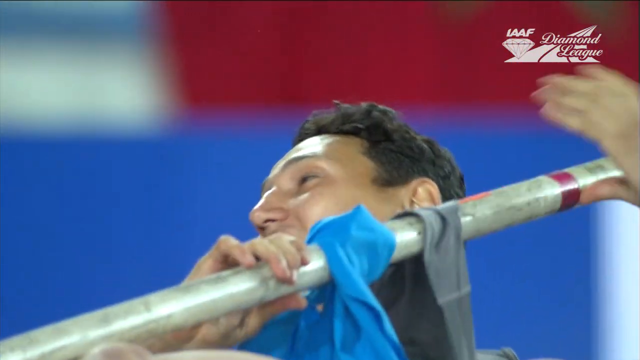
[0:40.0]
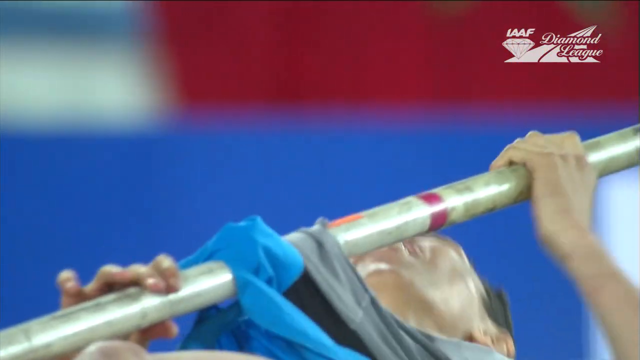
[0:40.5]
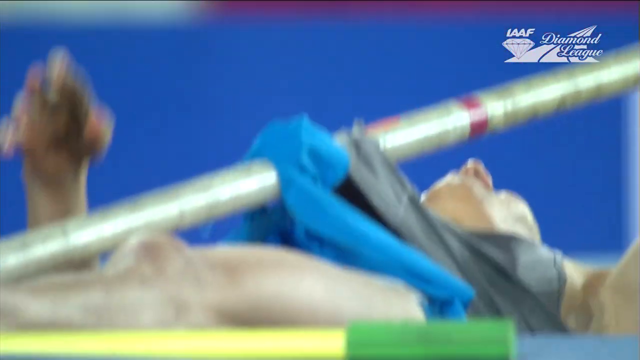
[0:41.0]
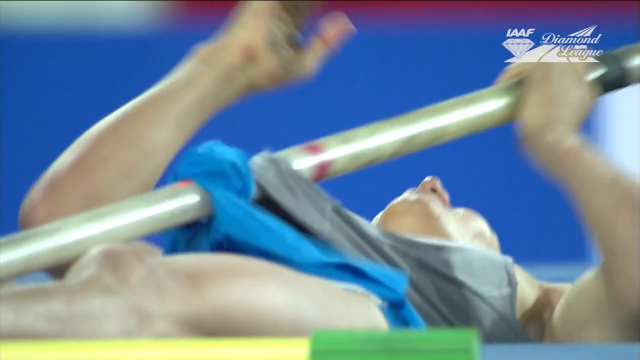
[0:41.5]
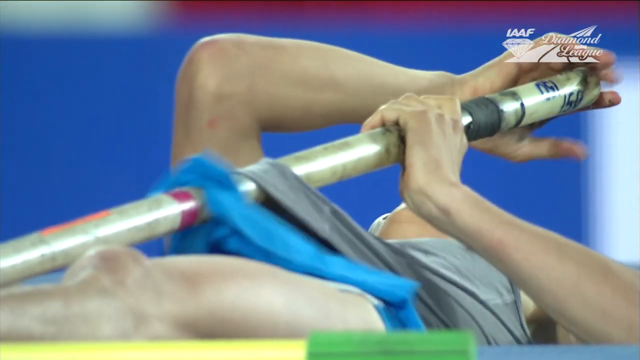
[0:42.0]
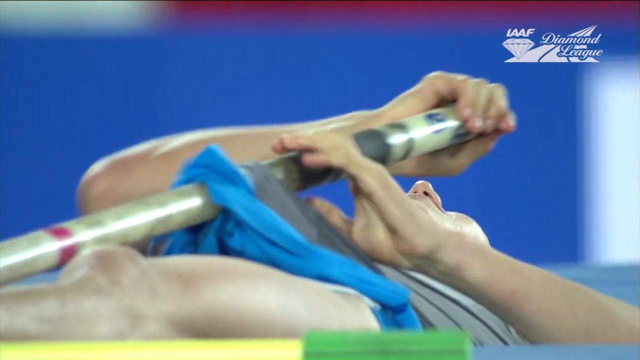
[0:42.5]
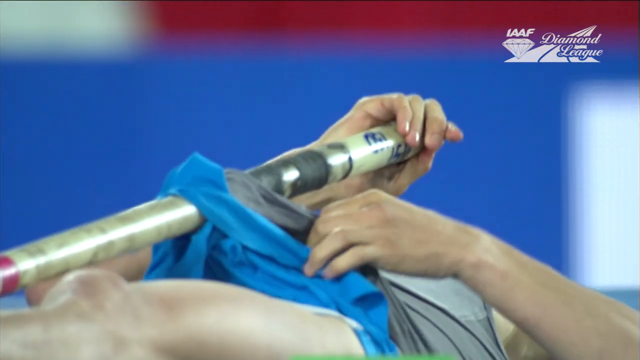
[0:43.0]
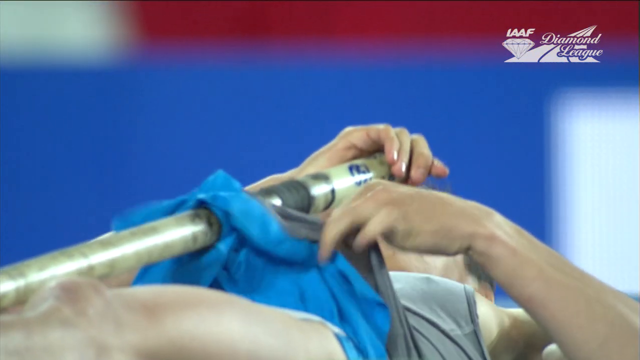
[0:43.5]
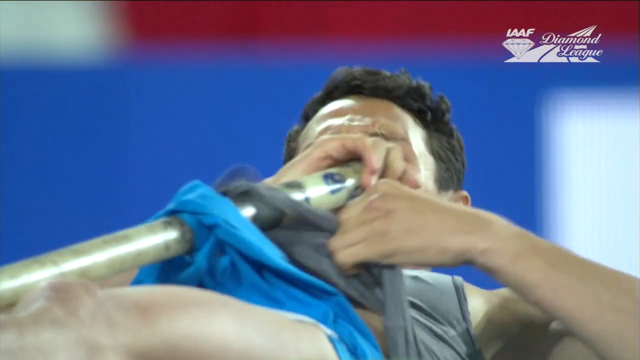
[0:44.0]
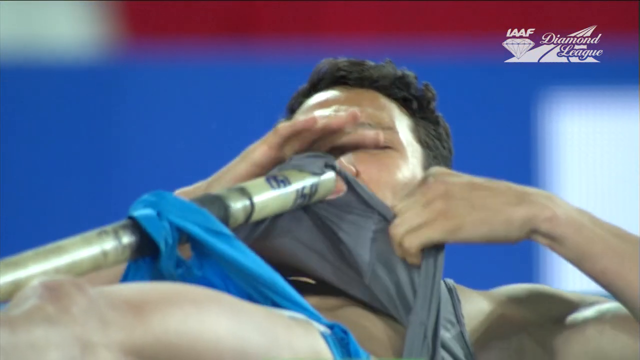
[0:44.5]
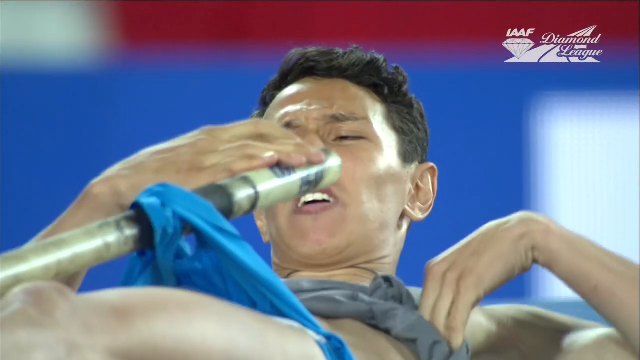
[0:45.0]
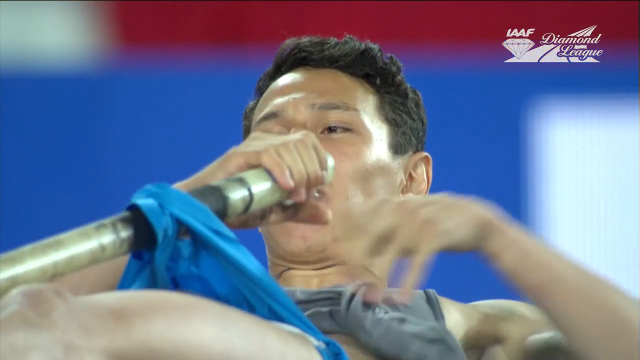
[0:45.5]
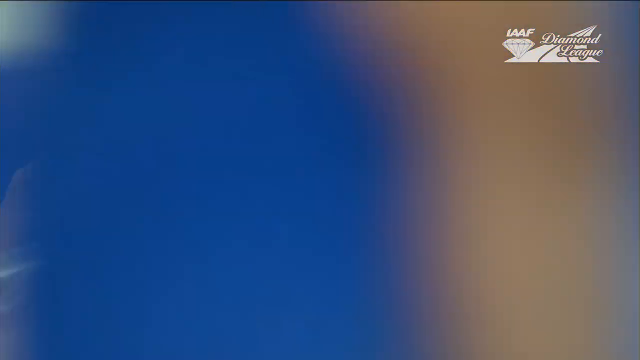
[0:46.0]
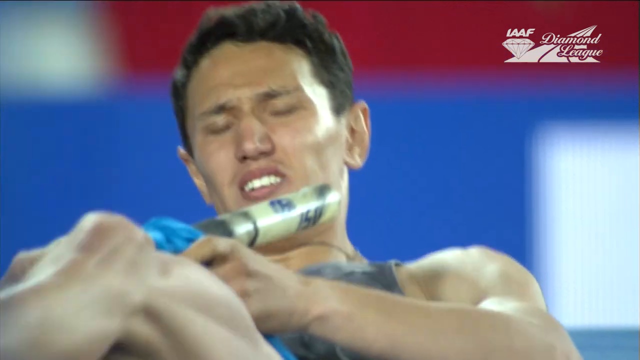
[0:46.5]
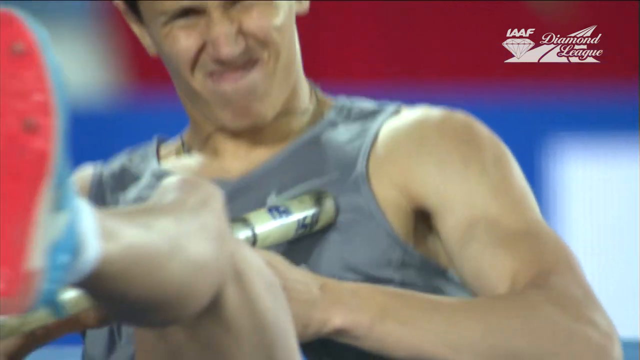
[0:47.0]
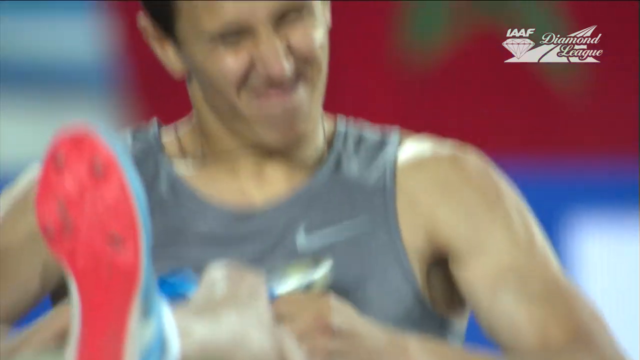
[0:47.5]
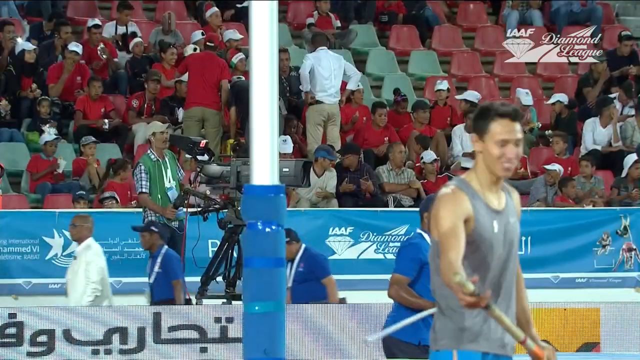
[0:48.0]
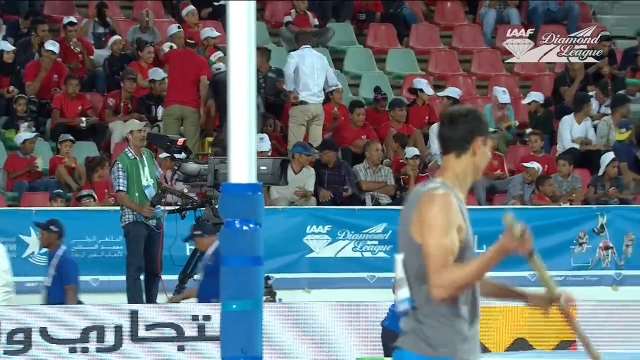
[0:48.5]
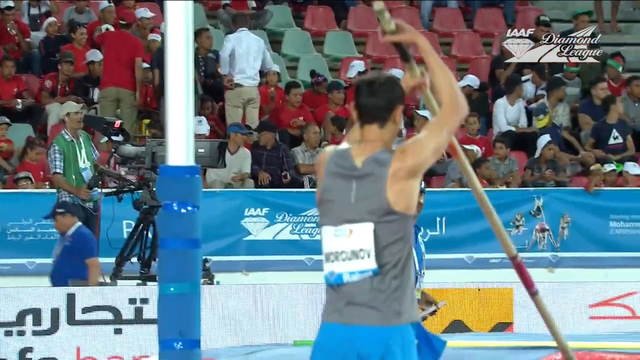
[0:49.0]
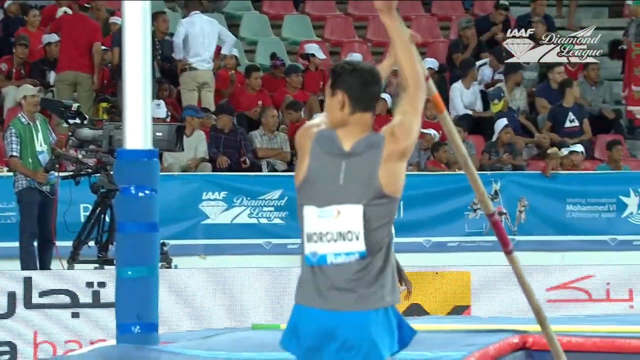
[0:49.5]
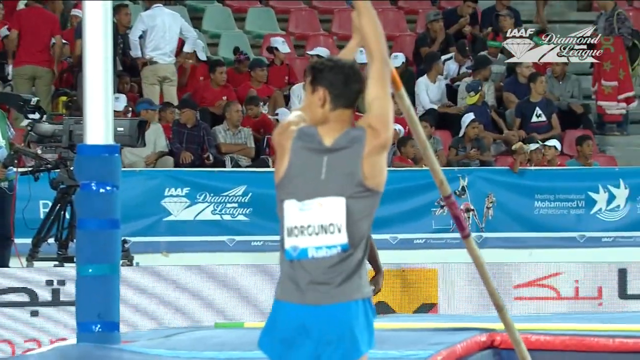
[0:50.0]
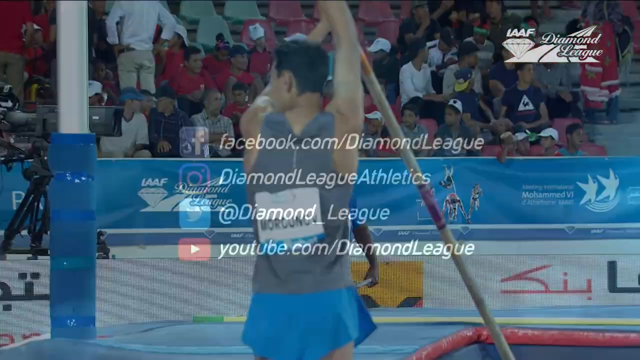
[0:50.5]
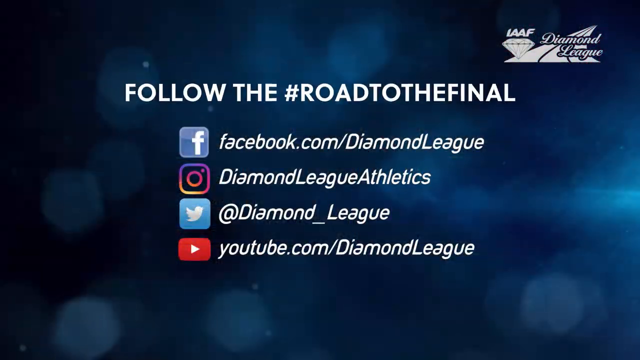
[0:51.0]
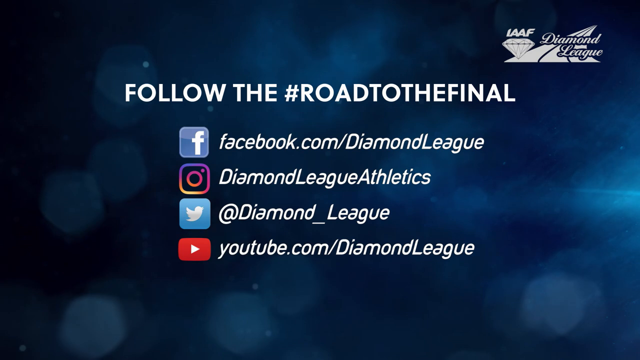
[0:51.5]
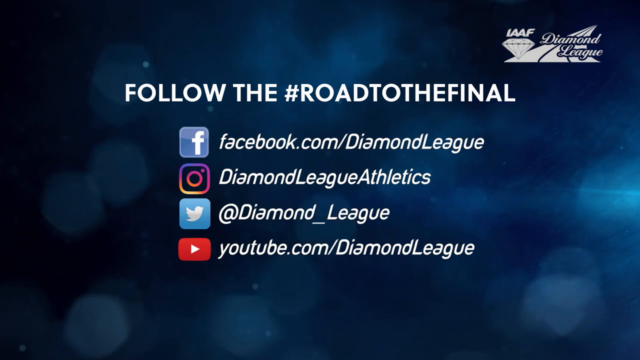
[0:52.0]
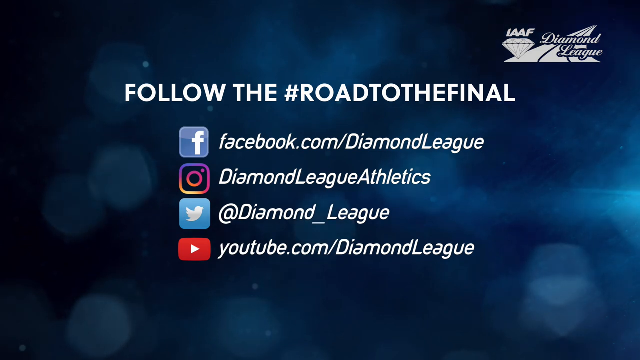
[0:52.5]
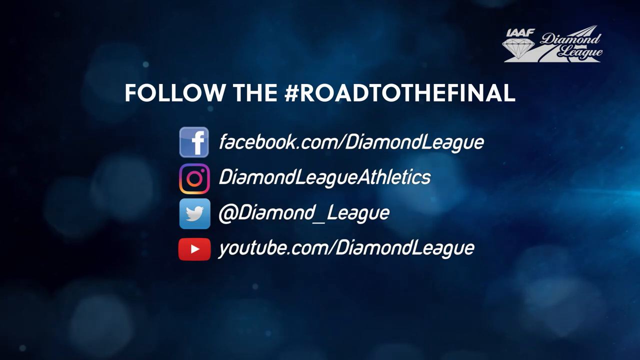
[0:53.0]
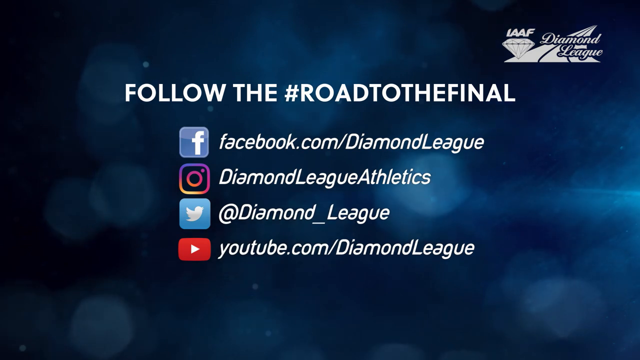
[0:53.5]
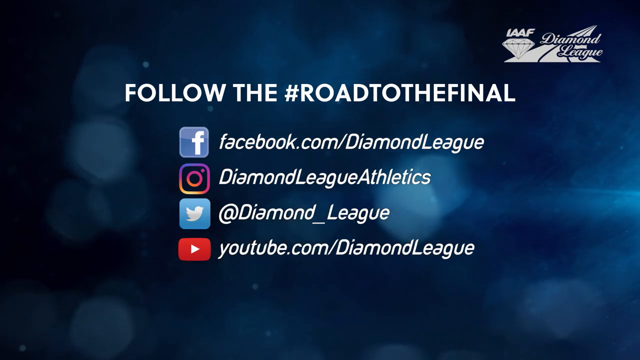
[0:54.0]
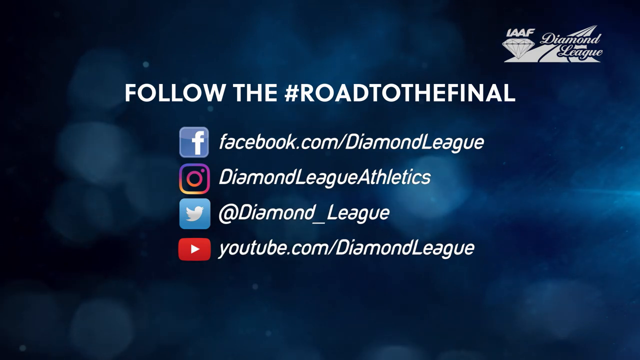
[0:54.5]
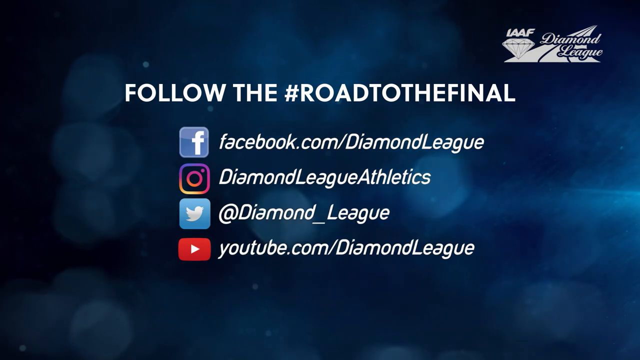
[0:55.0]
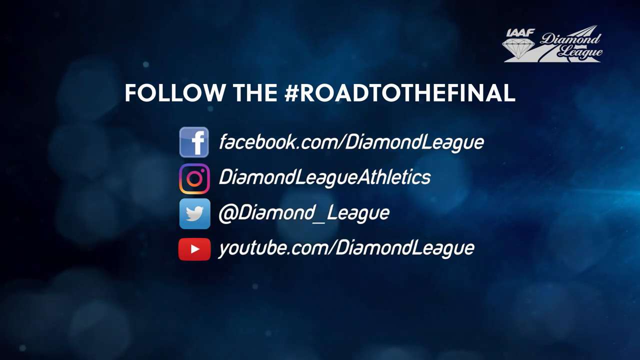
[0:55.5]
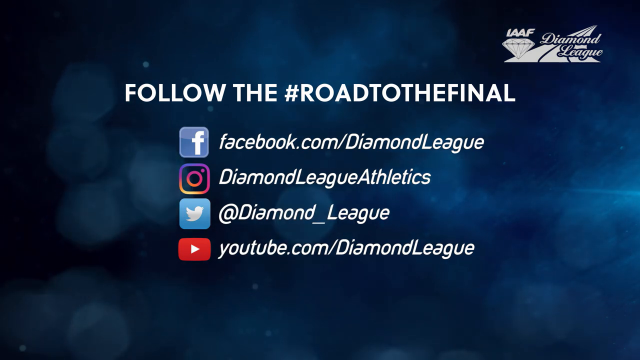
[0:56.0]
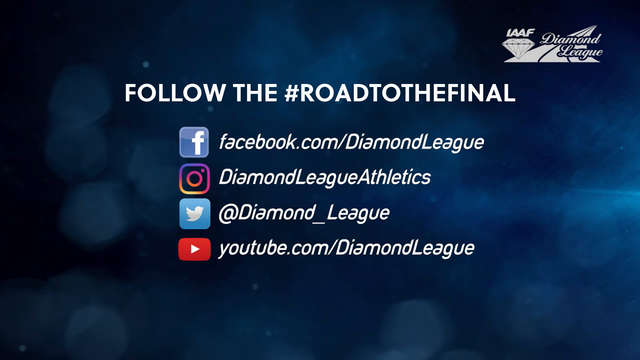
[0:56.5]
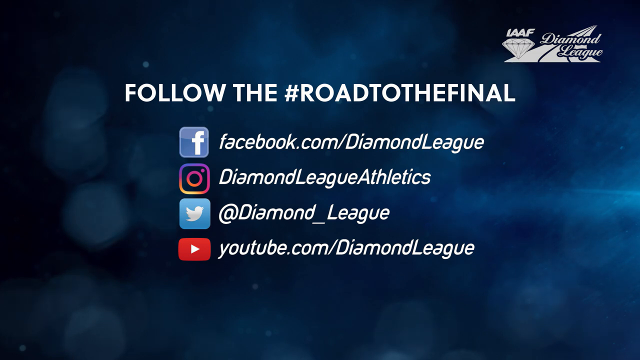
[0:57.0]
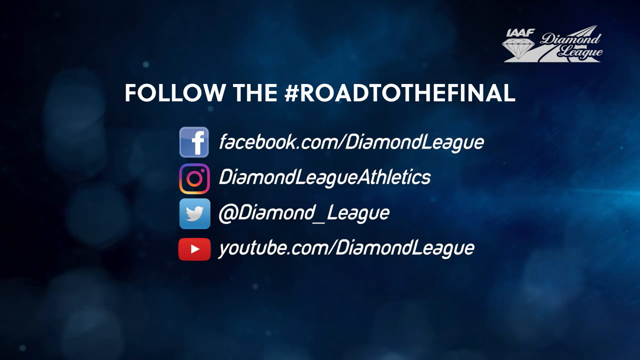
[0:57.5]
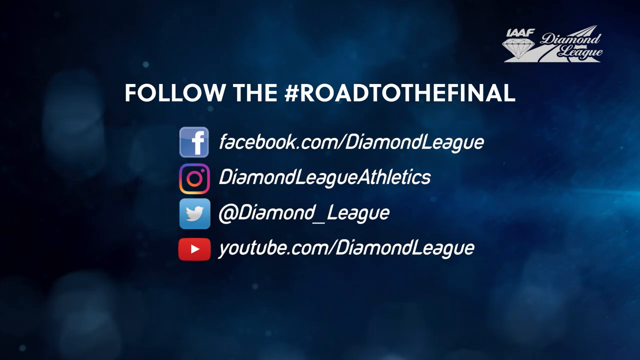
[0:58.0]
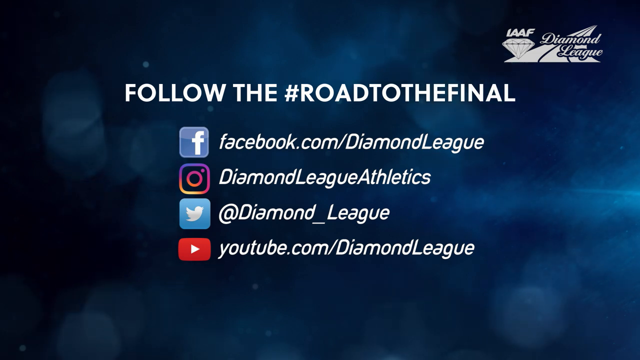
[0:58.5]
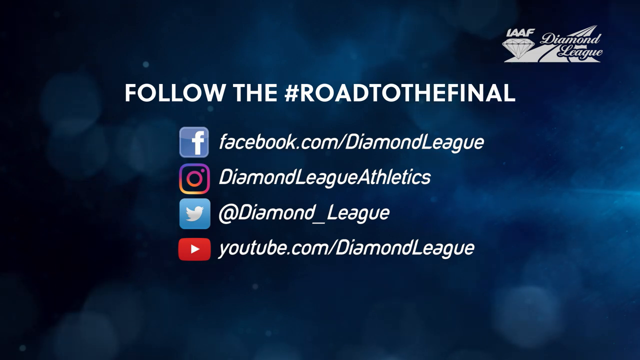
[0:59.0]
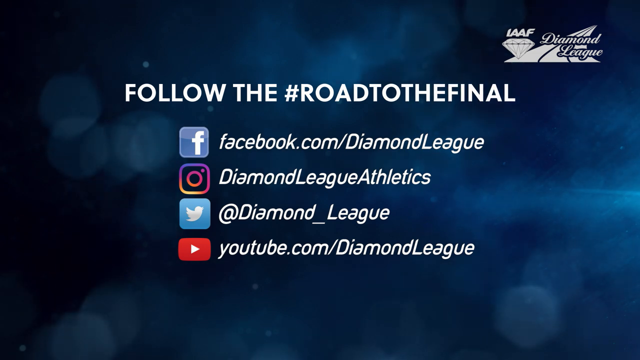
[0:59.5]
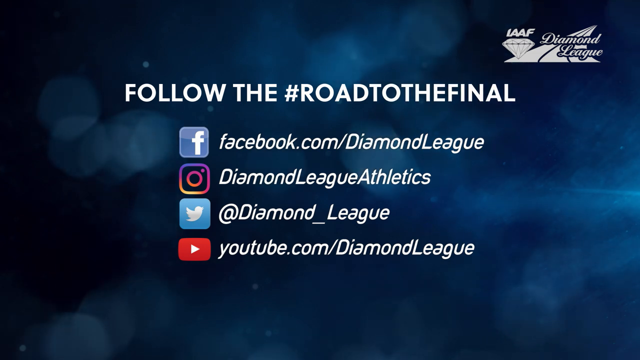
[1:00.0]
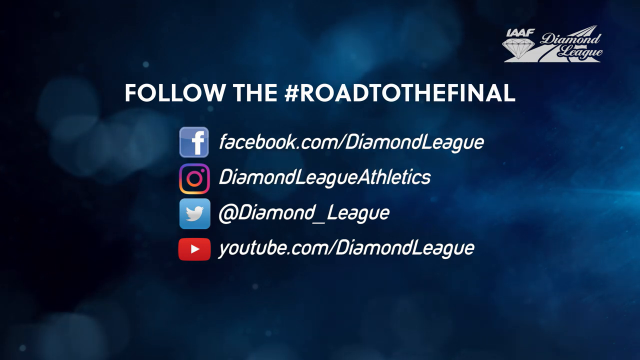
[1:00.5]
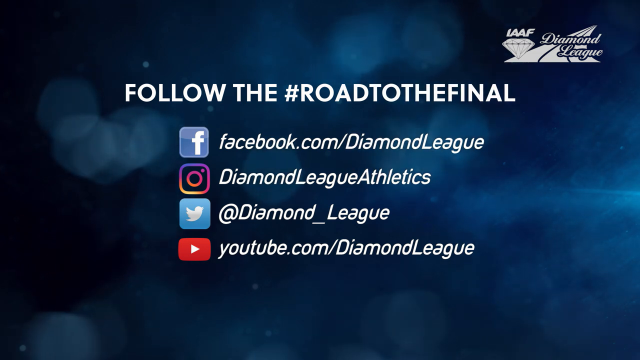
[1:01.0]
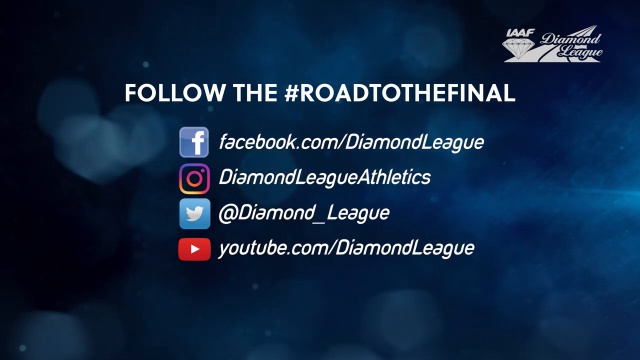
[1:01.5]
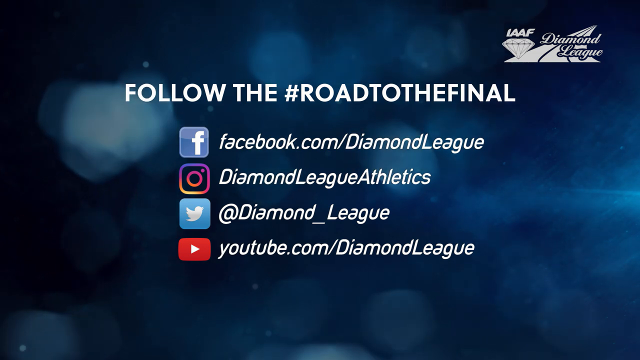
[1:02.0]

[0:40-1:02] The man who just failed to clear the bar in the pole vault is lying on a safety pad. He laughs, looks at the air, and starts pushing the pole that pierced his shorts and shirt down onto the ground. He wipes the sweat from his brow and sits up, but seems to be in pain as he collapses again. He stands up, finishing pushing the pole out of his clothing, and the shot then shows him standing and pacing in place for a second as he lifts the pole up in the air and looks at the bar he failed to clear. Afterwards, a promotional page appears reading "follow #Road to the Final". In the top right corner is a logo reading "Diamond League"; apart from the writing, the logo is three lines that seem to be a racetrack and a diamond, with the letters "IAAF" above the diamond. The page lists four places to go: a Facebook logo with "Facebook.com/Diamond League", an Instagram logo with "Diamond League Athletics", a Twitter logo with "at Diamond_League", and a YouTube logo with "YouTube.com/Diamond League".